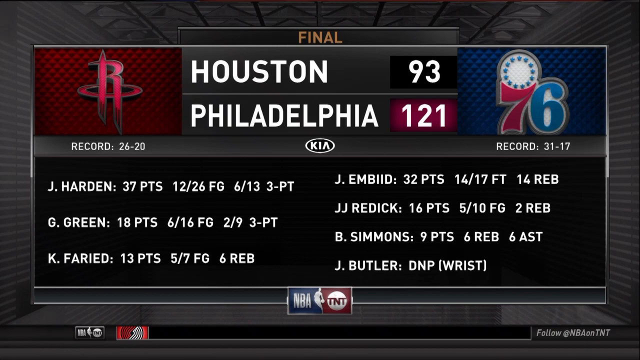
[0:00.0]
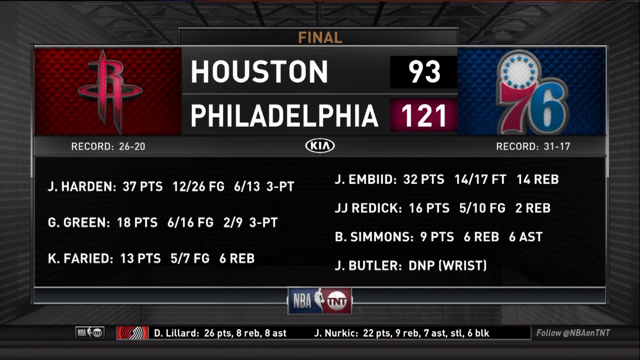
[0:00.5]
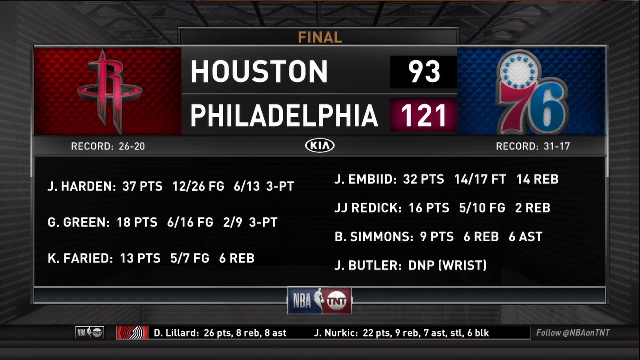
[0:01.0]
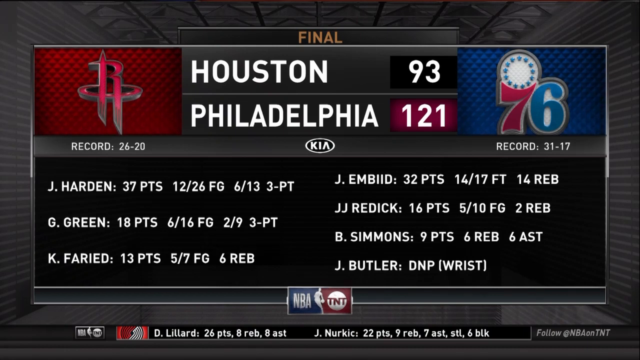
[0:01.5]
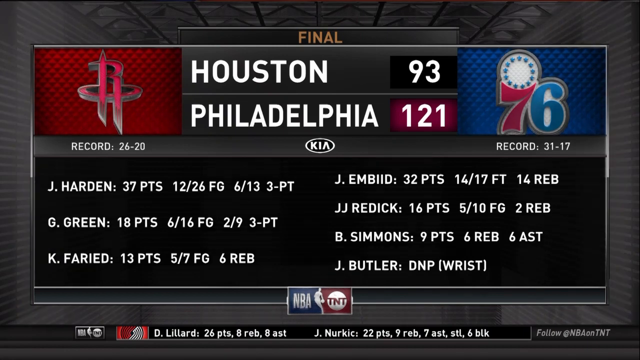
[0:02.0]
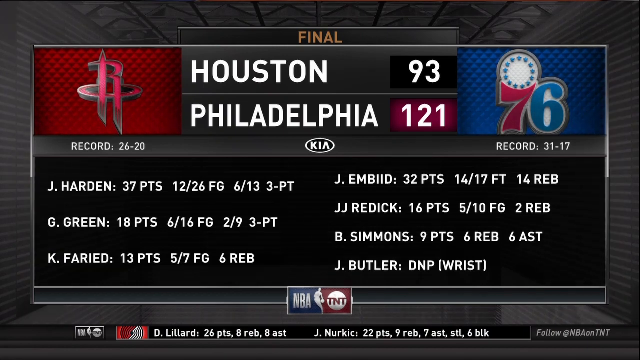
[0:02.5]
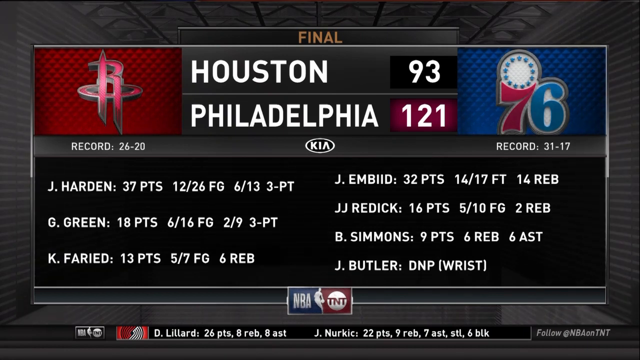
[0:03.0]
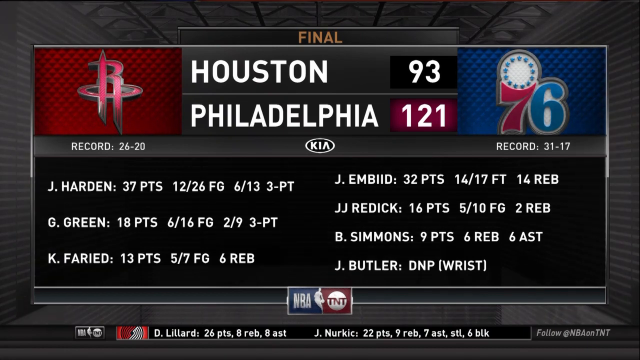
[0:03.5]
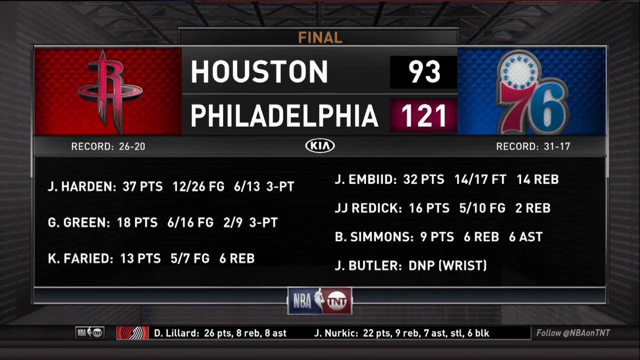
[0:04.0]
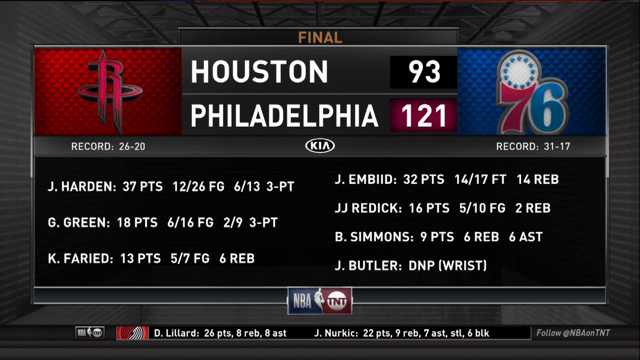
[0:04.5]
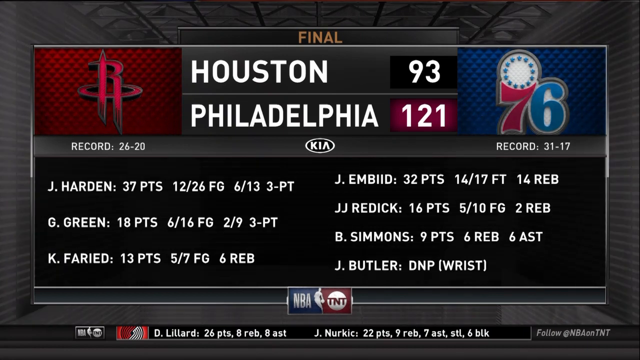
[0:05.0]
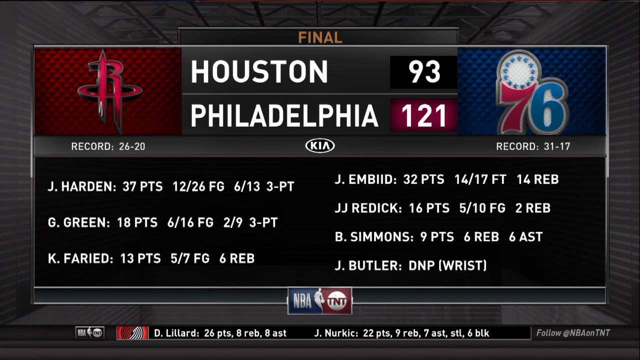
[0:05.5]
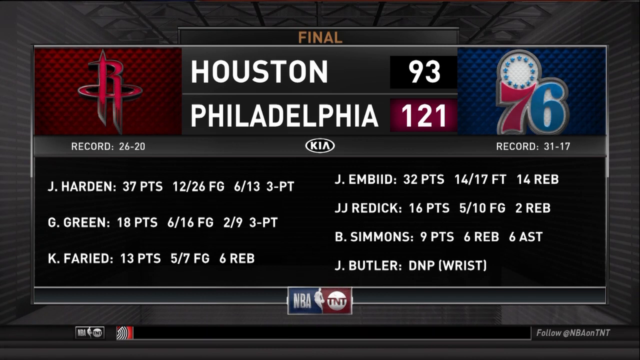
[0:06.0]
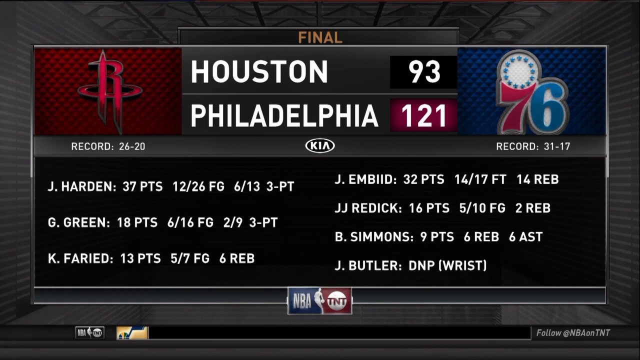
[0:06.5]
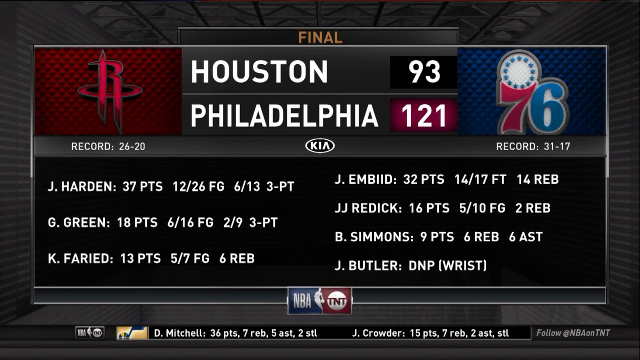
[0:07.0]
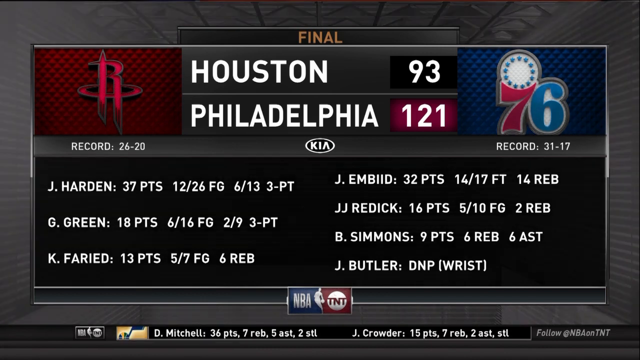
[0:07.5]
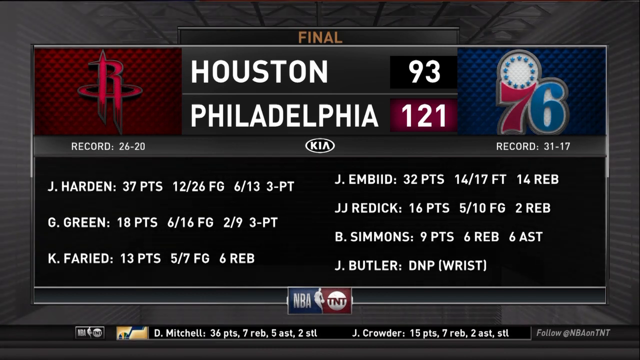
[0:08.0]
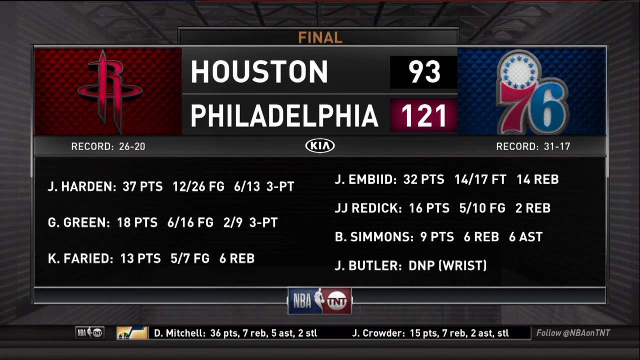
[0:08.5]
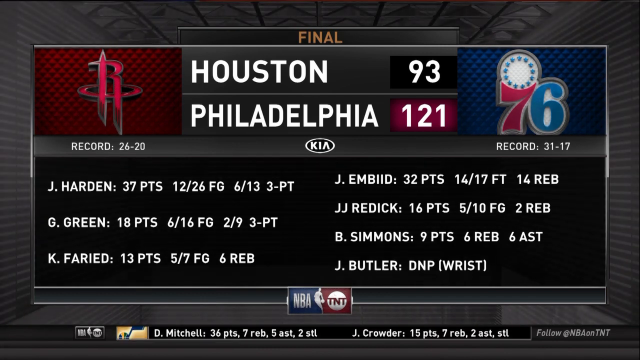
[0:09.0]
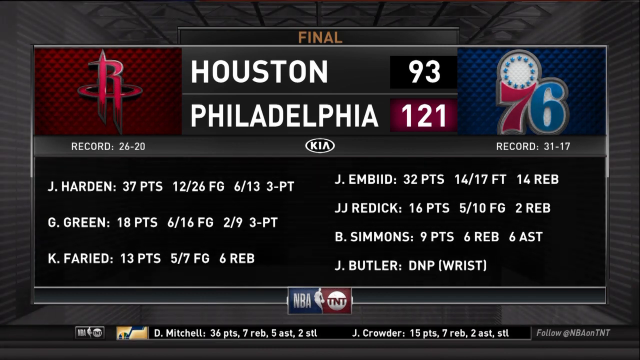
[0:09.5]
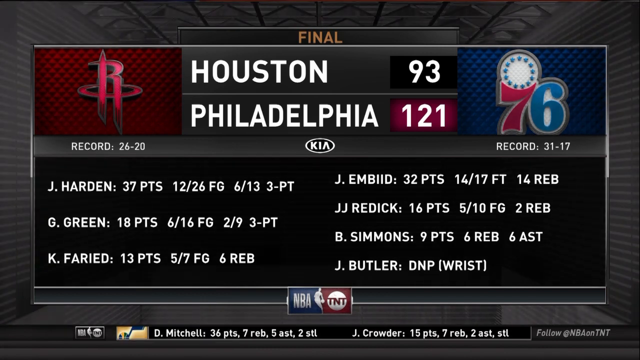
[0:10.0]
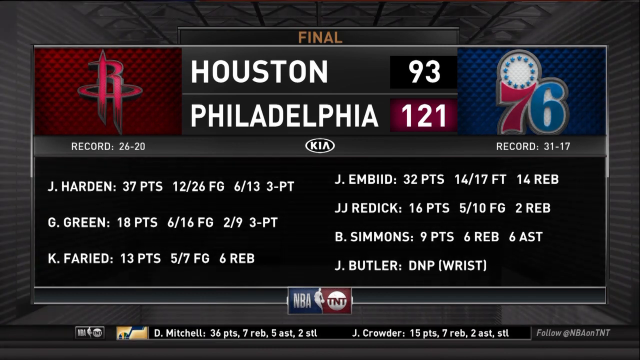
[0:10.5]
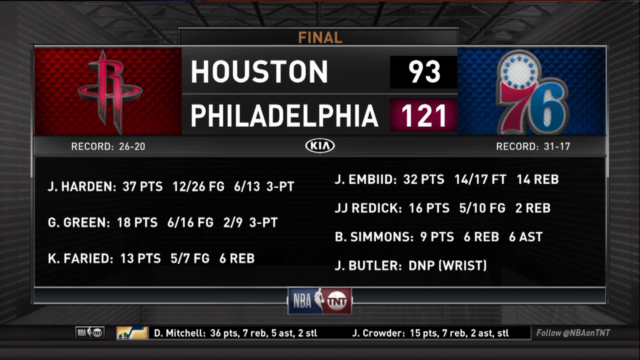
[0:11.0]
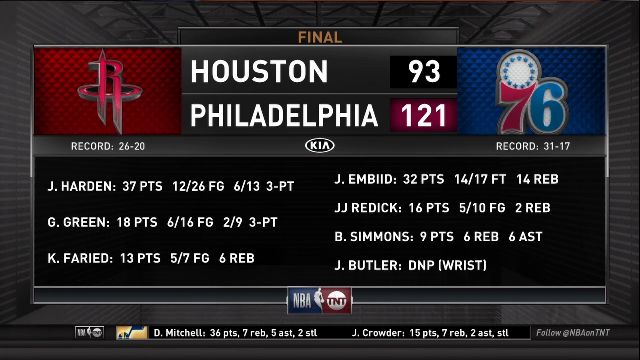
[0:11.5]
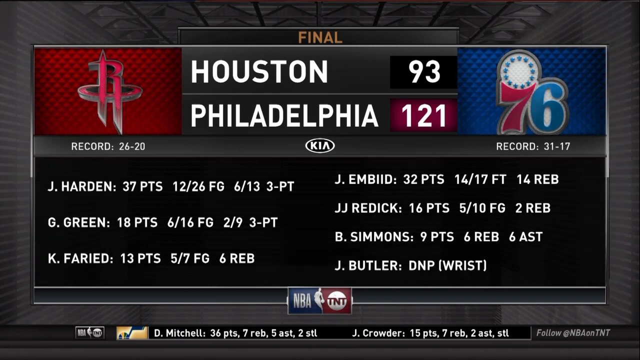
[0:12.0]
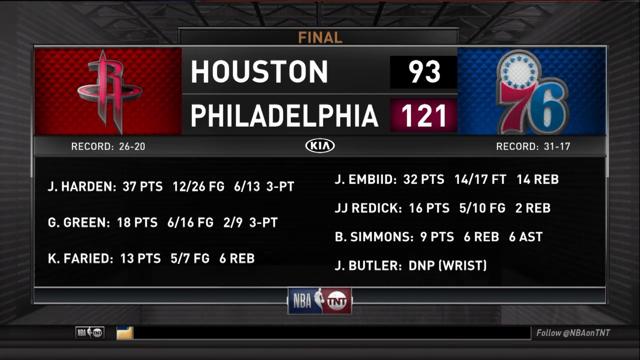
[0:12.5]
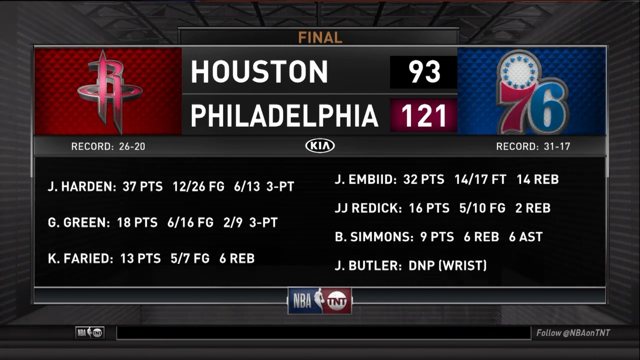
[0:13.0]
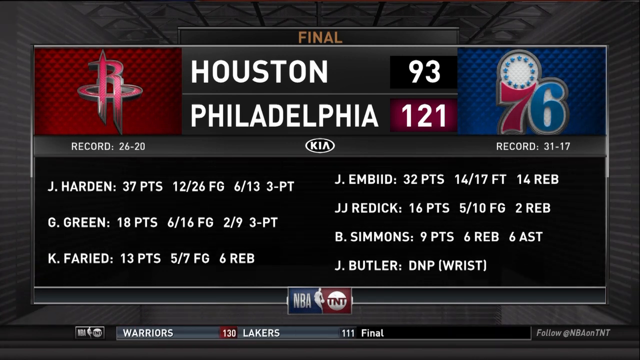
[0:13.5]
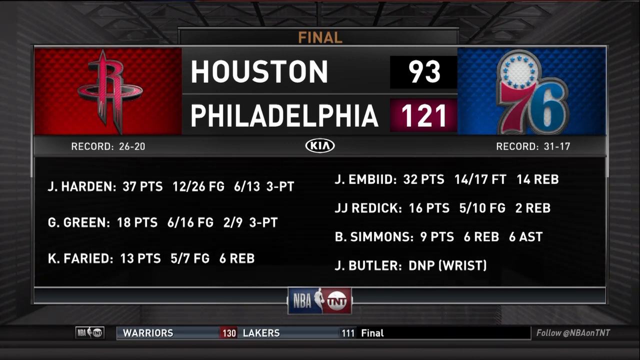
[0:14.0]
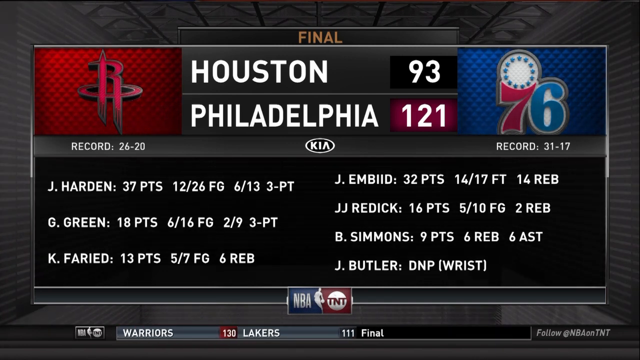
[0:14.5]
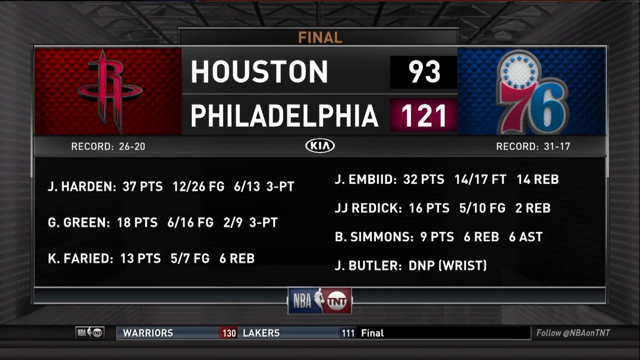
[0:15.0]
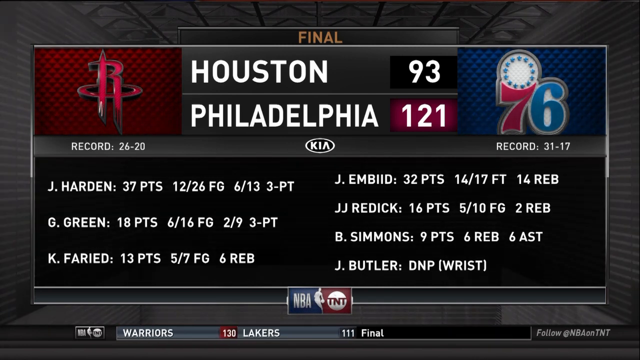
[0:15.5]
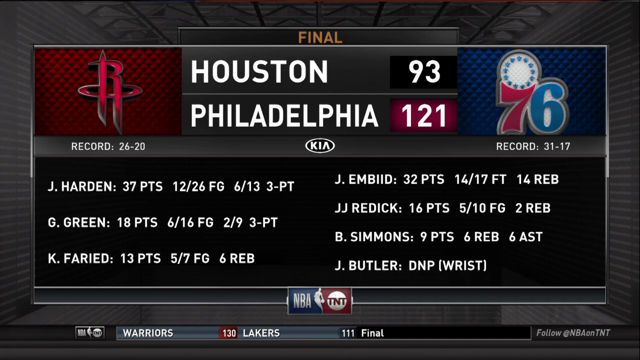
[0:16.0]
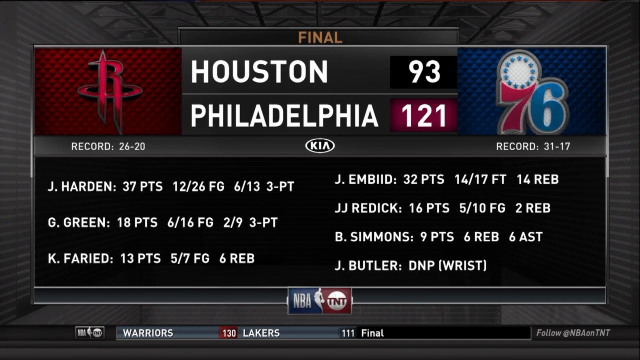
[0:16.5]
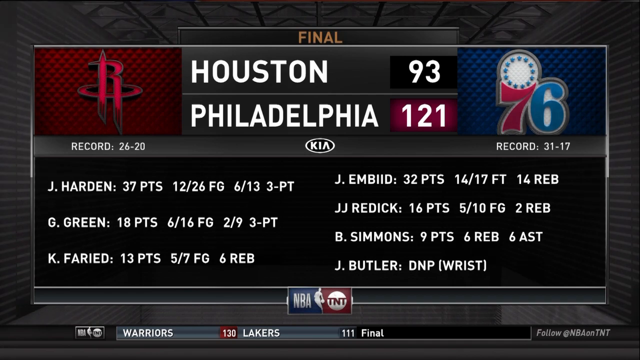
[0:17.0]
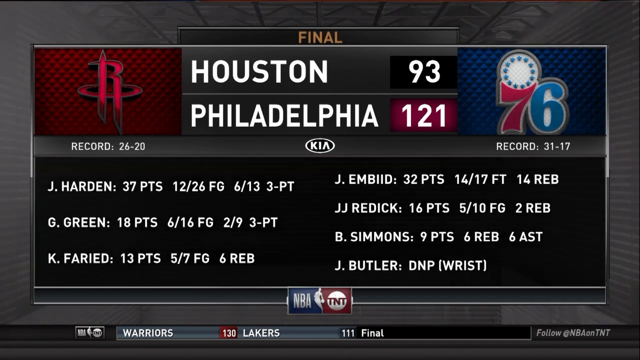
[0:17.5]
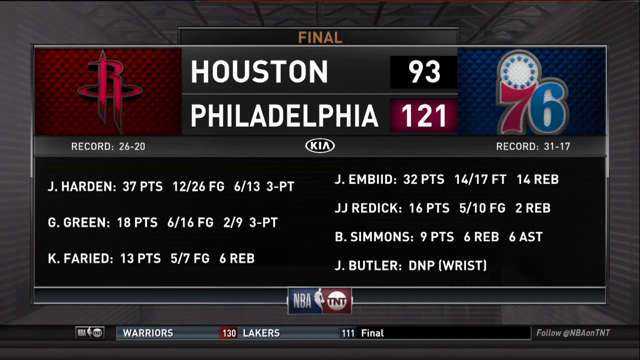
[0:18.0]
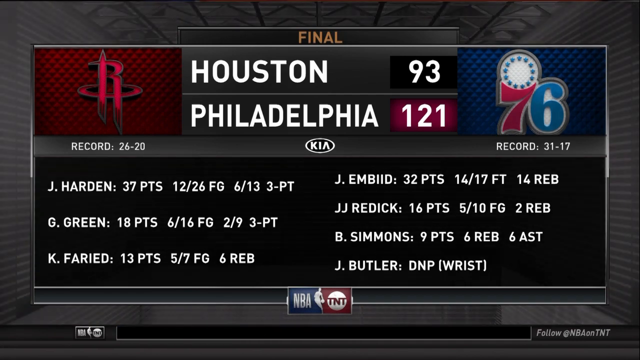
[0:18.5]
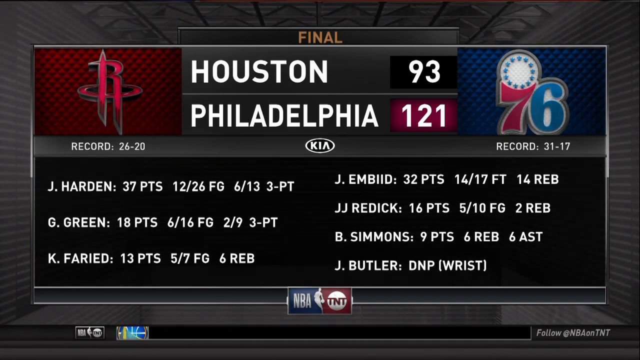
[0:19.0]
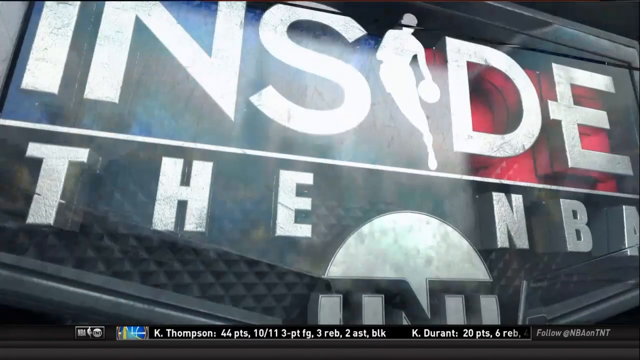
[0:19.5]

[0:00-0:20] The screen is dark gray, almost black. At the top, in gold, is the word "final." Beneath it, in white, is "Houston" with the number "93" in white to its right. Below that is "Philadelphia" with "121" to its right, in white and highlighted in red. To the left of these is a red square with a bright red letter "R" in the middle, and on the right side is a blue square with the number "76" in it, the 7 in red and the 6 in blue. Under the R is the record "26-20" and under the 76 is the record "31-17." Below all of that, on the left side of the screen, the text reads "Jay Harden 37 points 12-26 FG 6-13 3-PT," followed by "G Green" and then "K Fareed." To the right of those names is another list running top to bottom: "J Embed," "JJ Reddick," "B Simmons" and "J Butler."